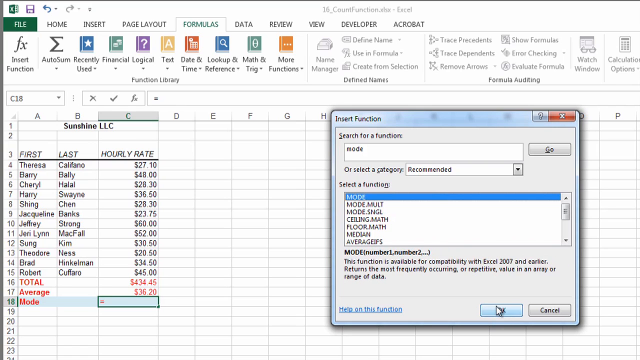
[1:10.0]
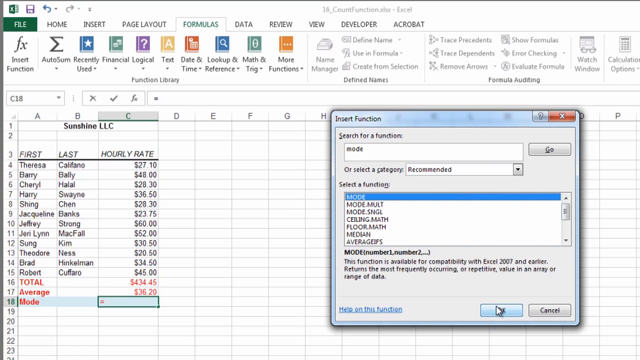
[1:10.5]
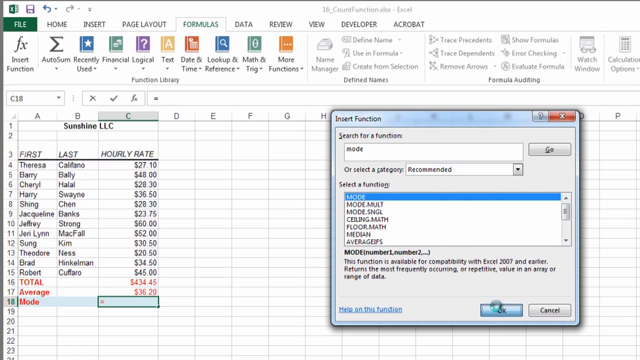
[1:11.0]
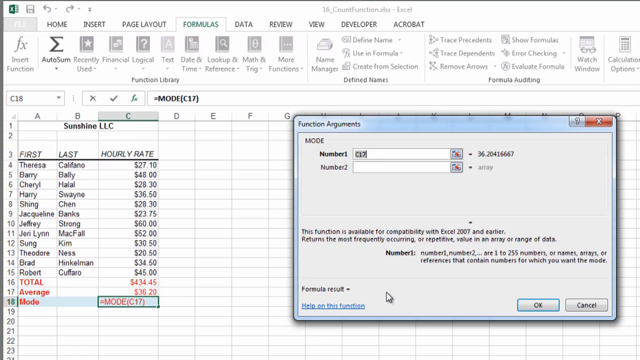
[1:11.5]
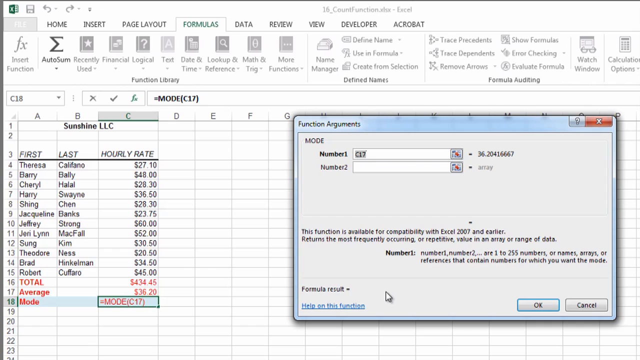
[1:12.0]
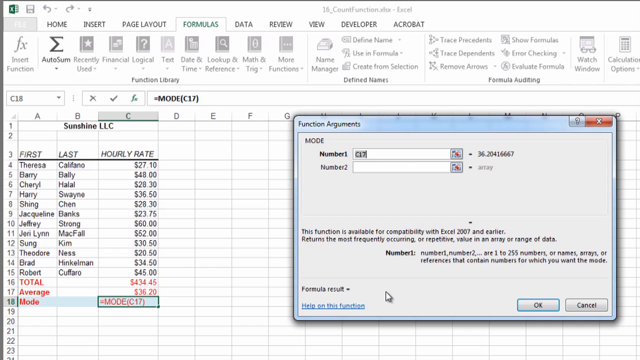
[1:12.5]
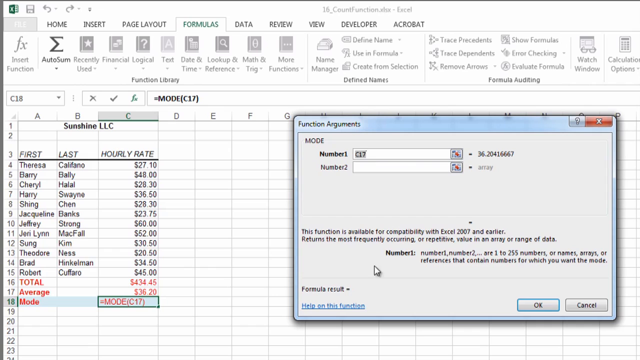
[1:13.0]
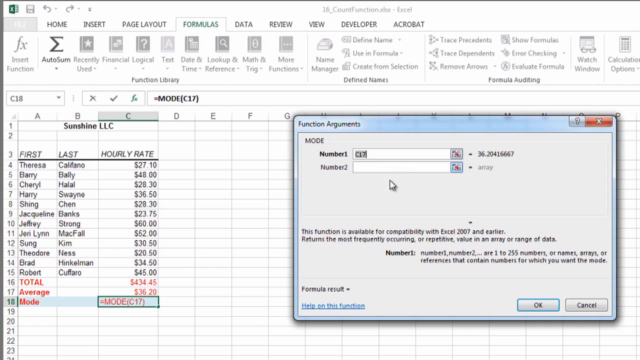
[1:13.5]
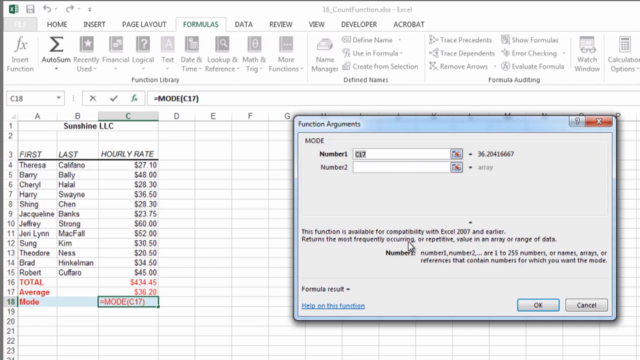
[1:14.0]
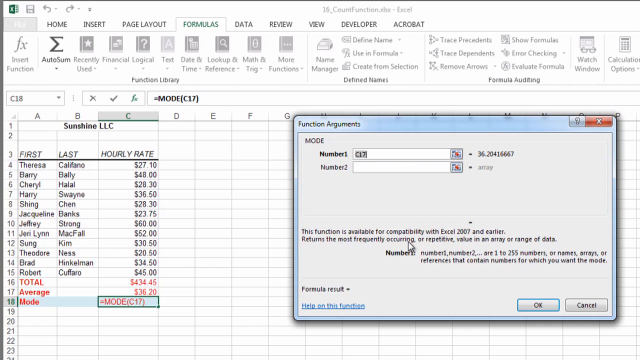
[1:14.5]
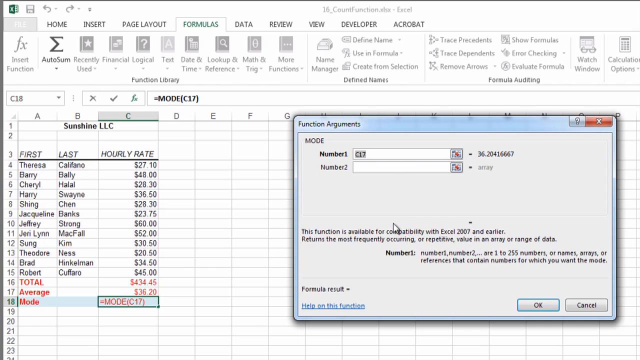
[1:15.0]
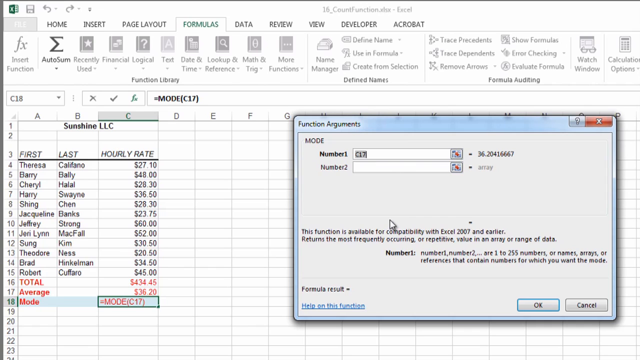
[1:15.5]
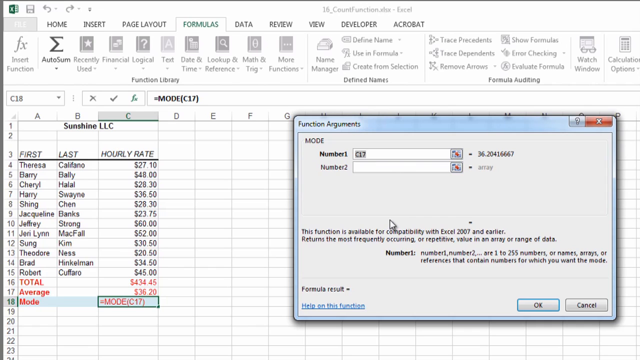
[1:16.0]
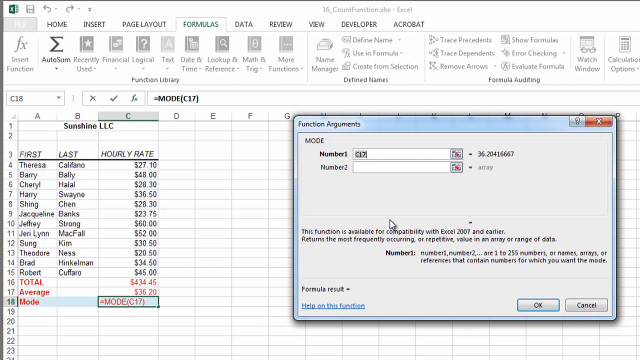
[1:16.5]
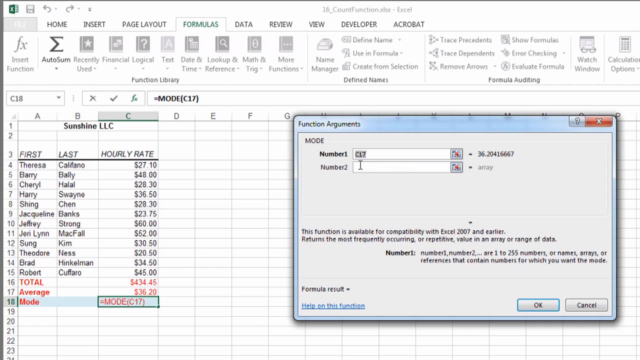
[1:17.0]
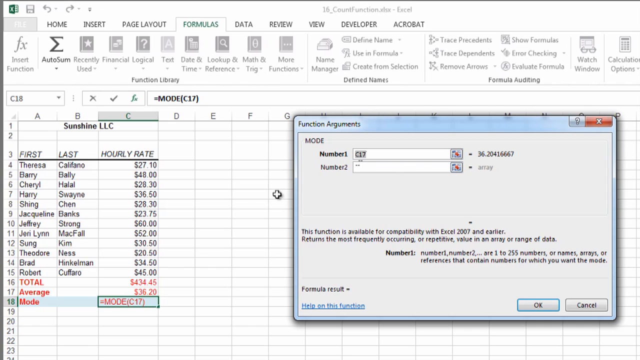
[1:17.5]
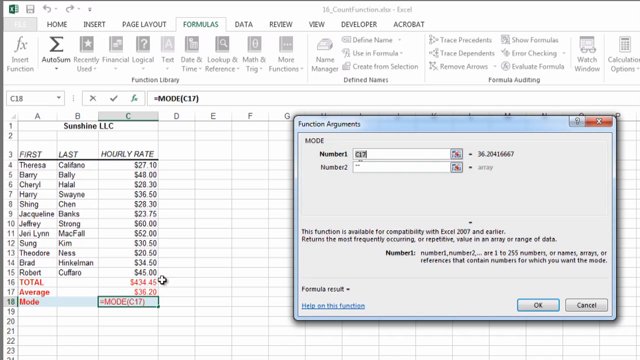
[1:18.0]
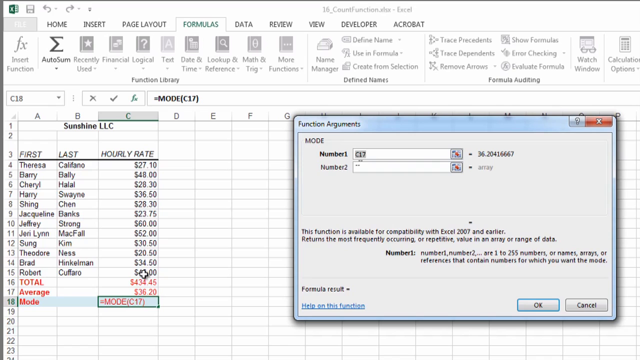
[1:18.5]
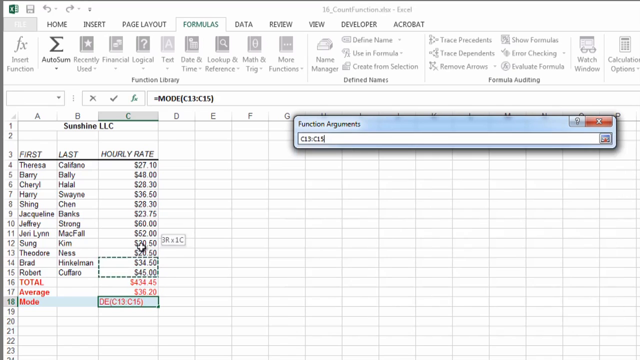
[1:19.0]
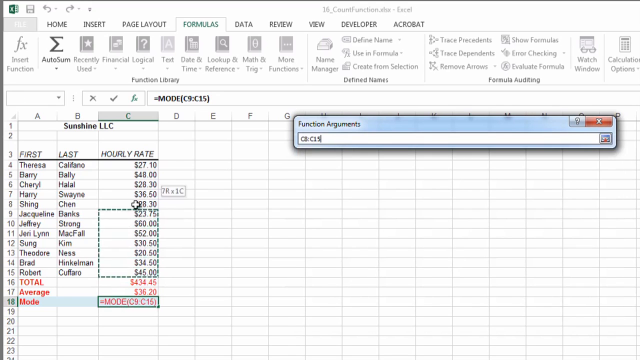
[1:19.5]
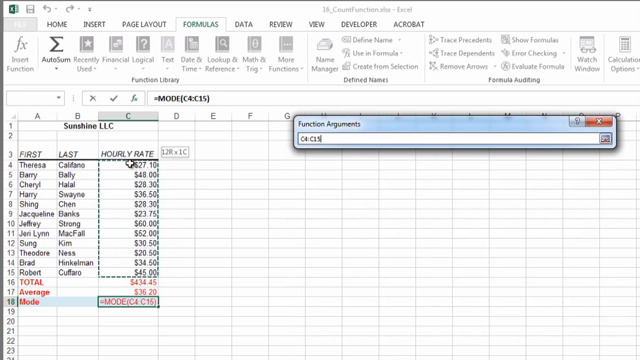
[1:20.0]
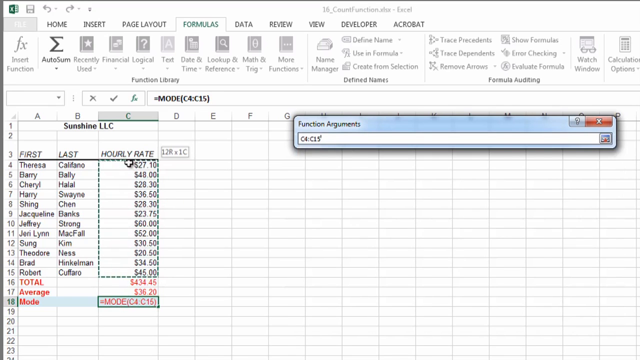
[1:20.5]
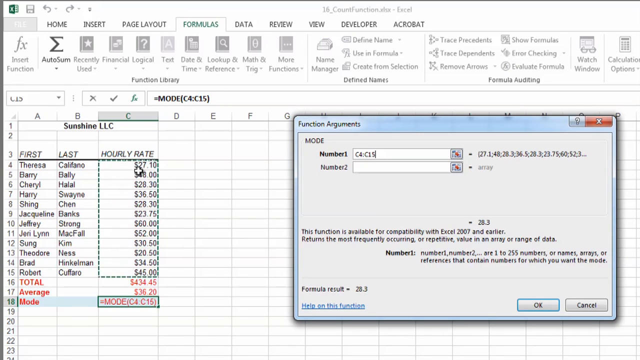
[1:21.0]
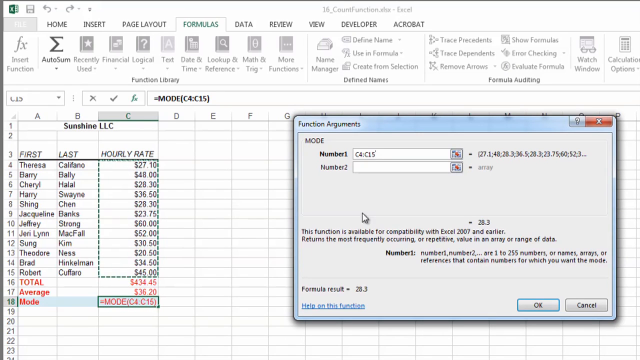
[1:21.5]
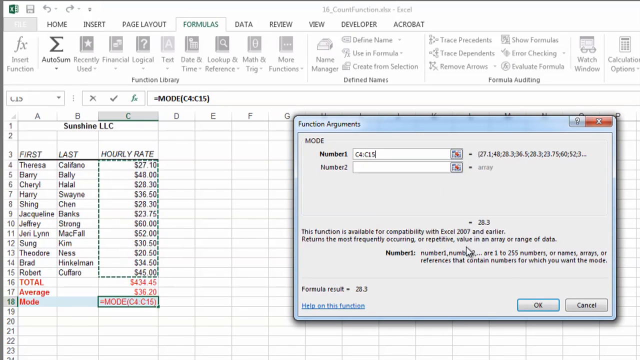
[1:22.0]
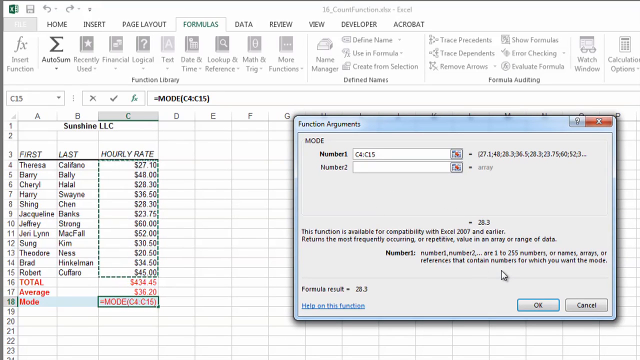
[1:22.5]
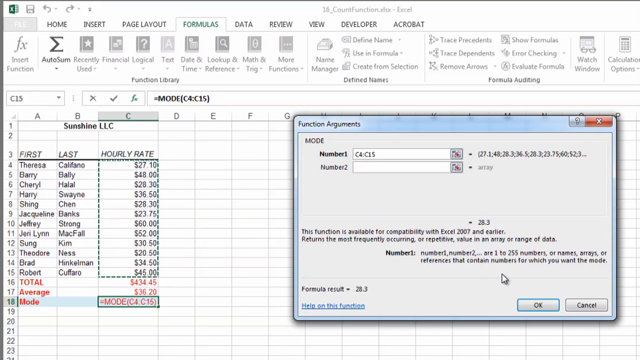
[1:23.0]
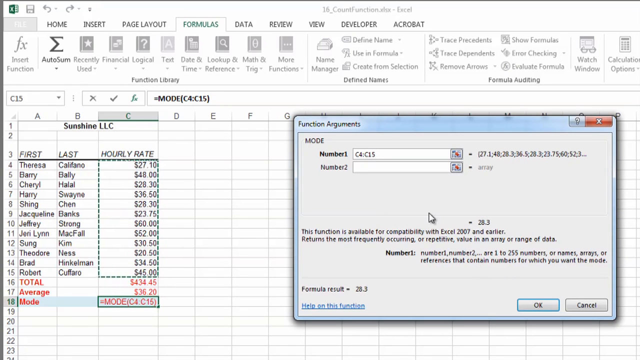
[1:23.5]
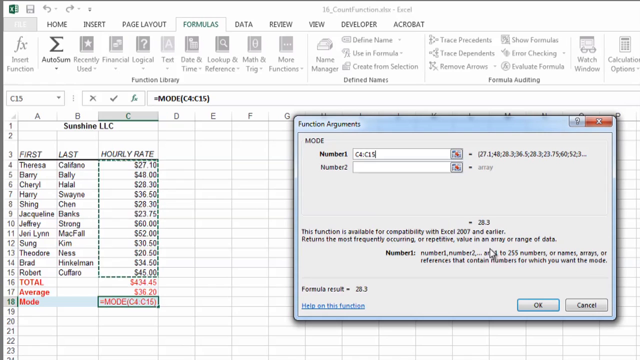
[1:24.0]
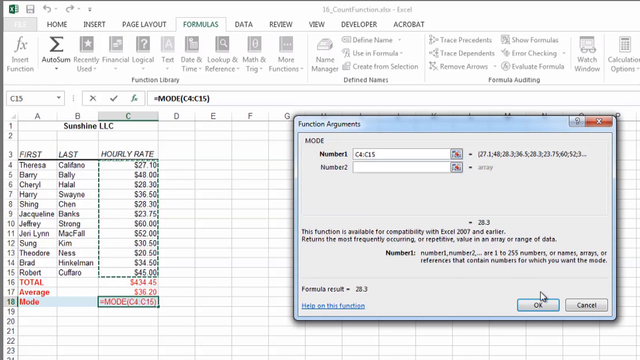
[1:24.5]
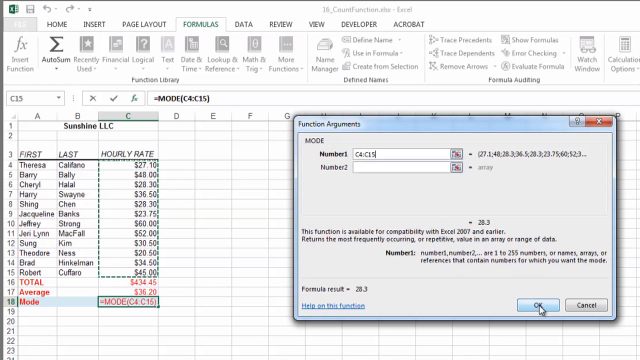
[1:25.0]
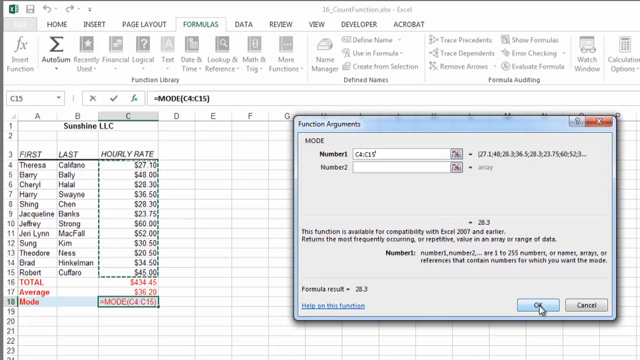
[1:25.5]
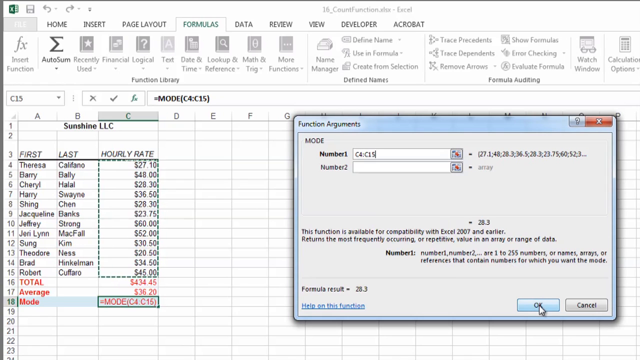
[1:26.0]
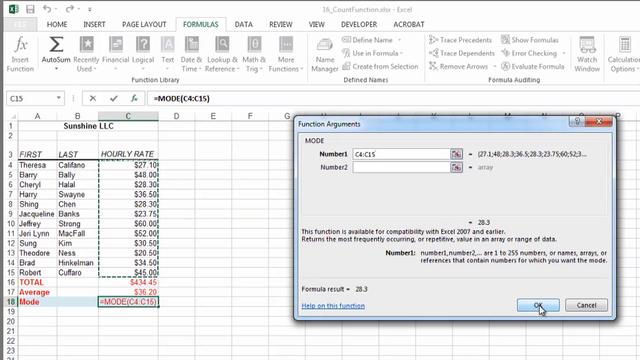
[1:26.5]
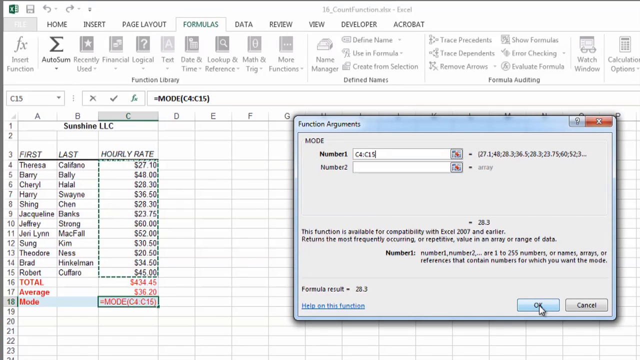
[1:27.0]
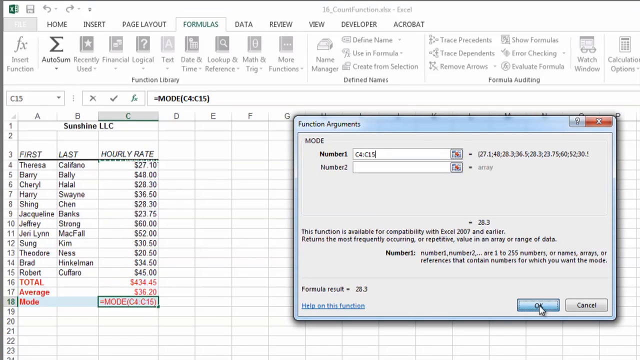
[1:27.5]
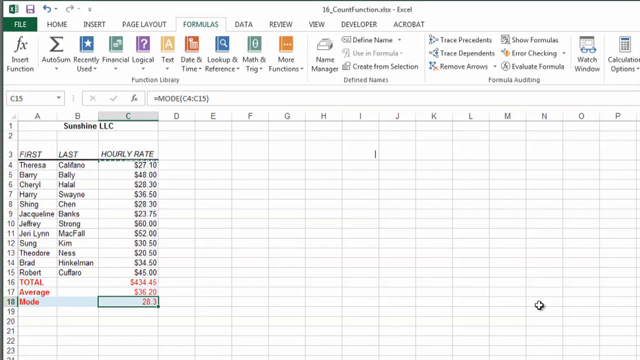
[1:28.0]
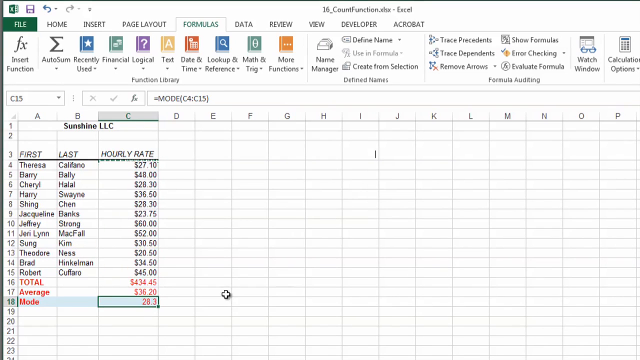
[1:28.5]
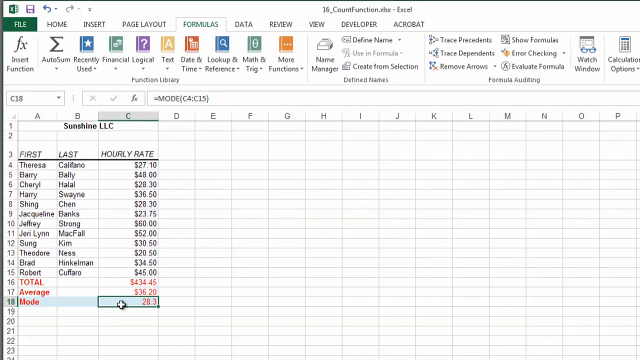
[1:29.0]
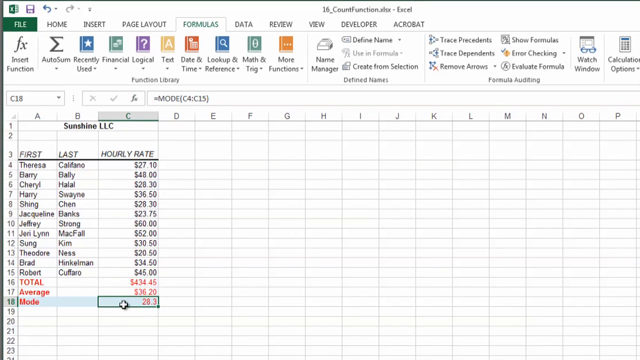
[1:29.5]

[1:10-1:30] The Insert Function window is displayed over the Excel program window, with the word "mode" typed into the search box. Below the search box is a list of functions: Mode, Mode Multiply, Mode Single, Ceiling Math, Floor Math, Median and Average. The description for the mode function says "this function is available for compatibility with Excel 2007 and earlier, returns the most frequently occurring or repetitive value in an array or range of data". The instructor clicks OK and is taken to a Function Arguments window, where the argument for number 1 is C17. The instructor then selects a portion of the data in the spreadsheet, the range is placed in the number 1 spot of the function arguments, and she clicks OK.